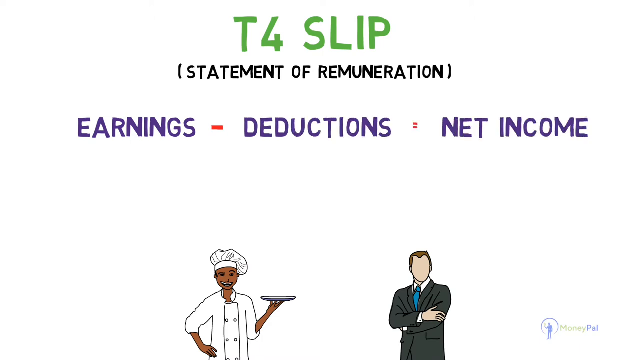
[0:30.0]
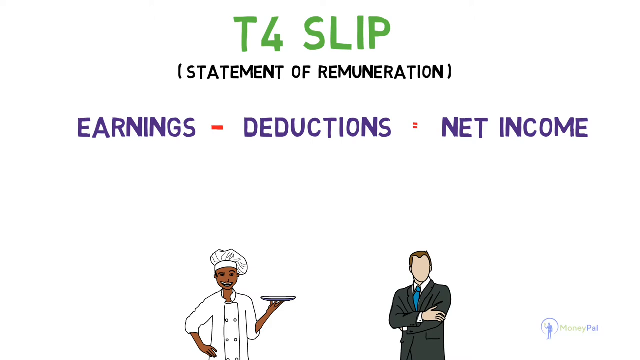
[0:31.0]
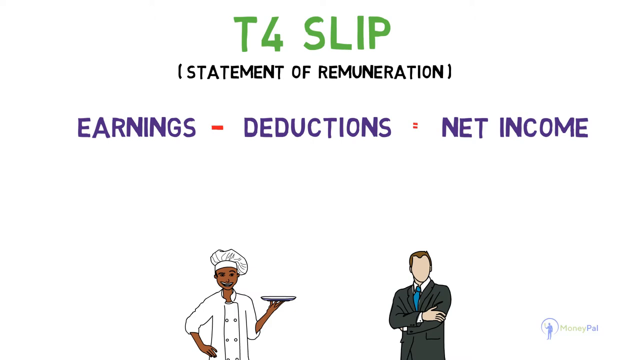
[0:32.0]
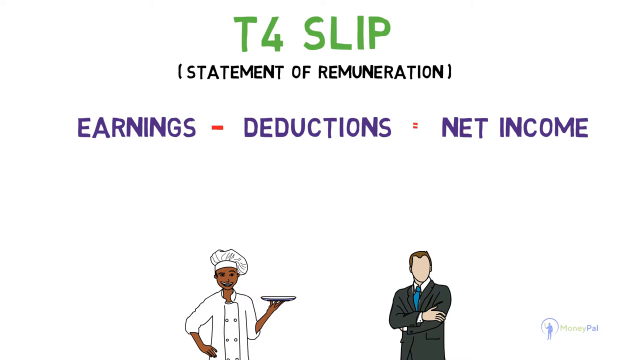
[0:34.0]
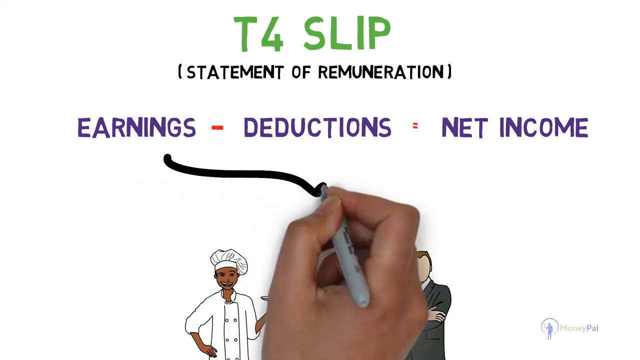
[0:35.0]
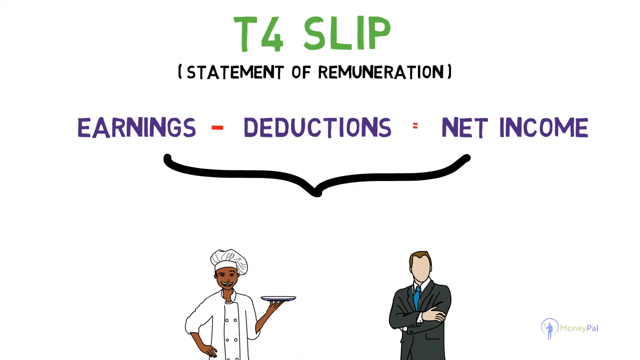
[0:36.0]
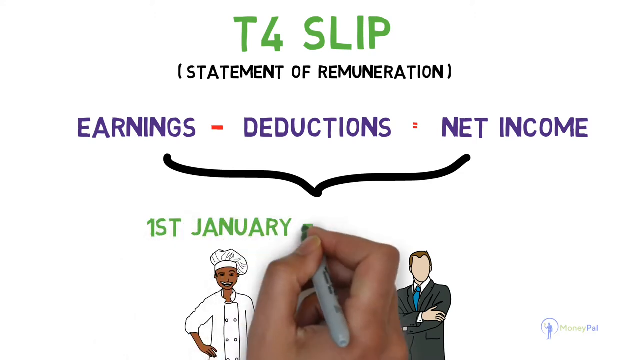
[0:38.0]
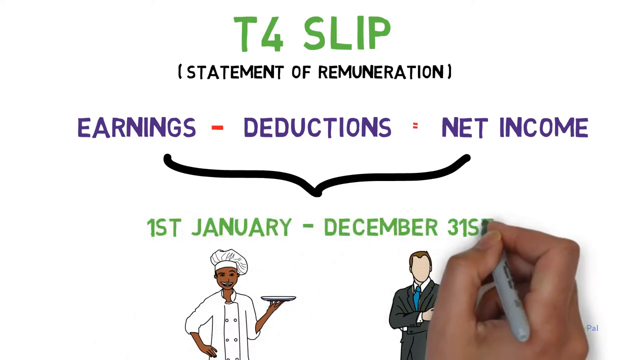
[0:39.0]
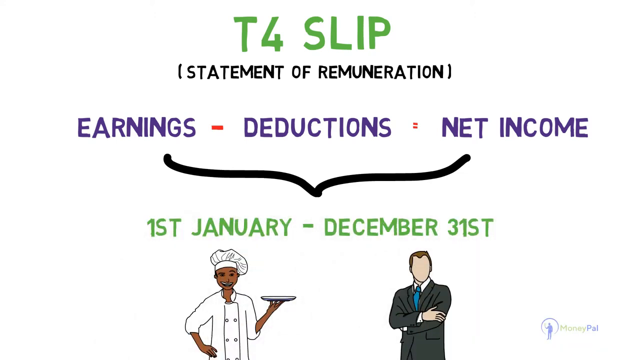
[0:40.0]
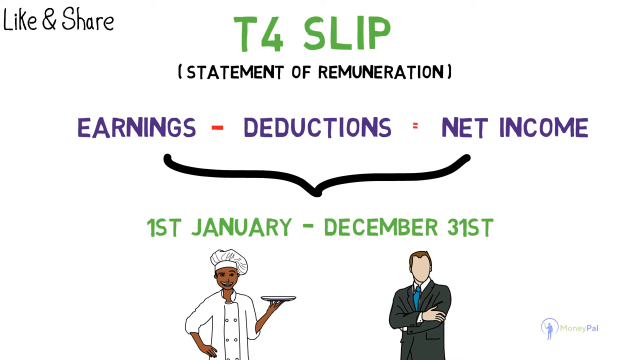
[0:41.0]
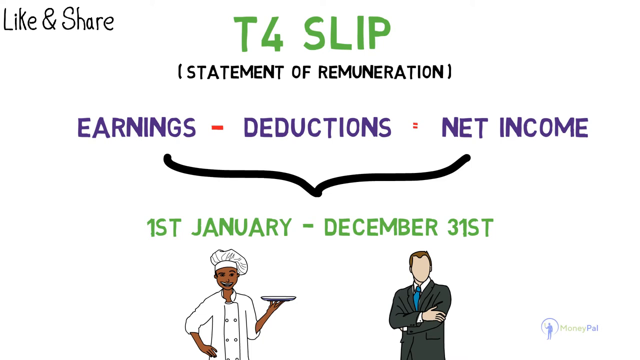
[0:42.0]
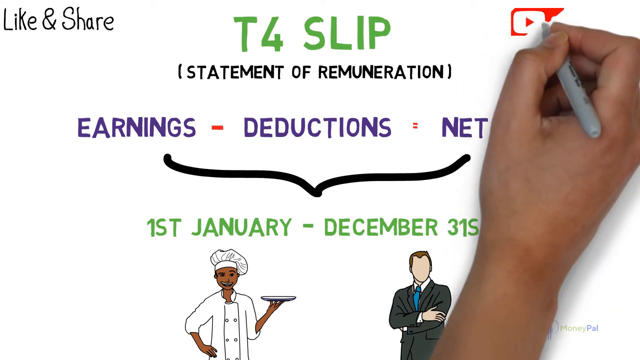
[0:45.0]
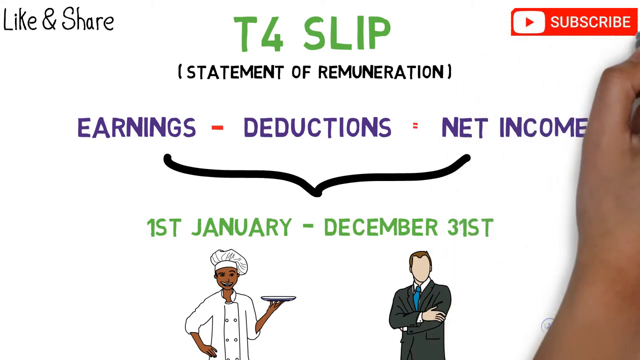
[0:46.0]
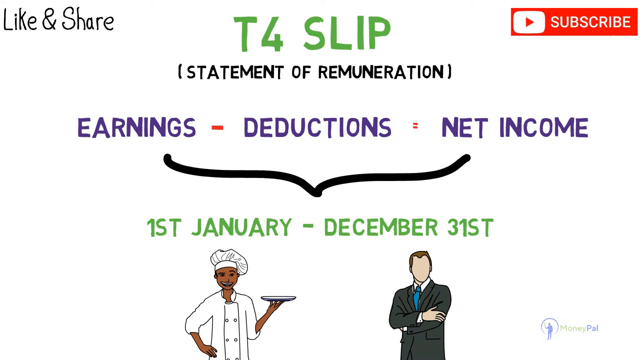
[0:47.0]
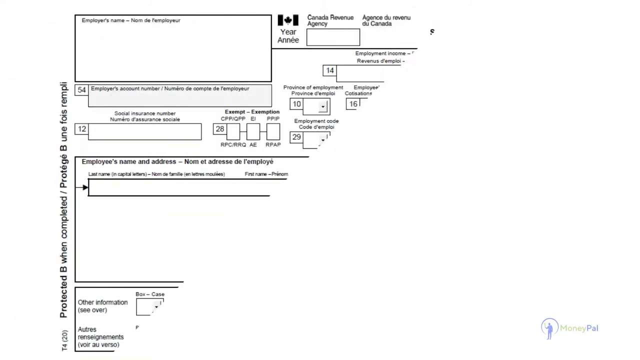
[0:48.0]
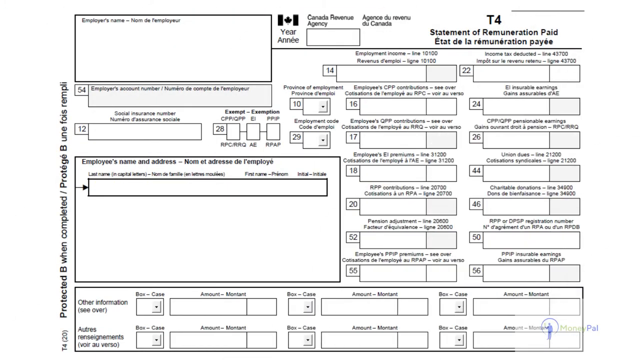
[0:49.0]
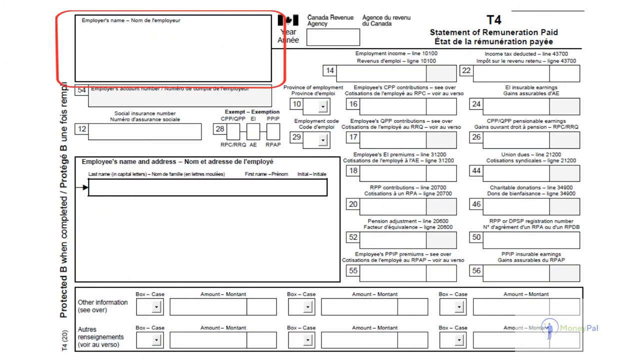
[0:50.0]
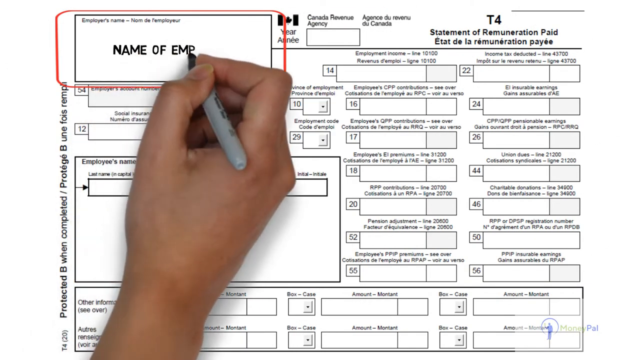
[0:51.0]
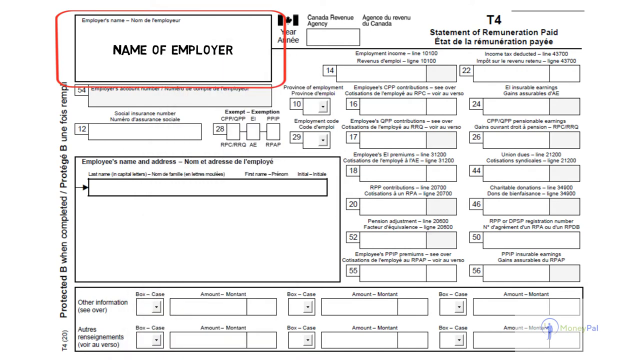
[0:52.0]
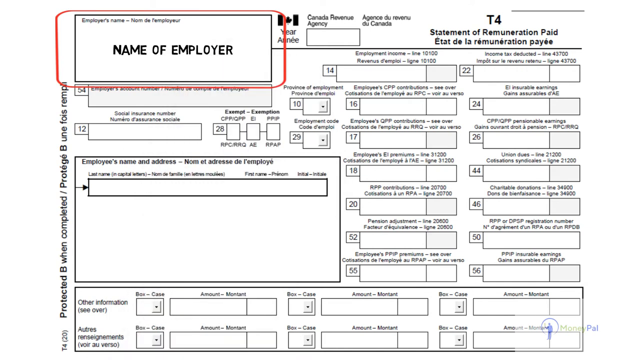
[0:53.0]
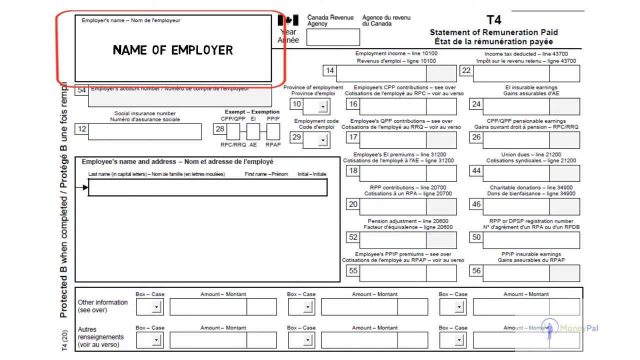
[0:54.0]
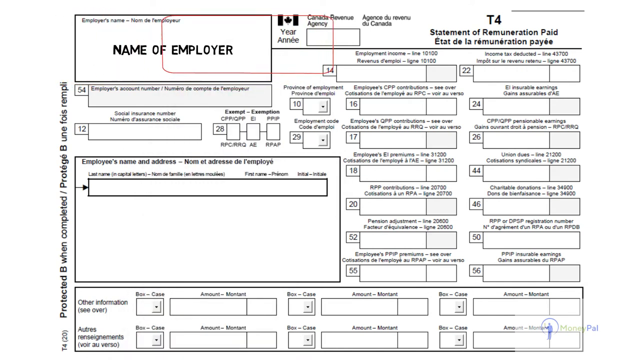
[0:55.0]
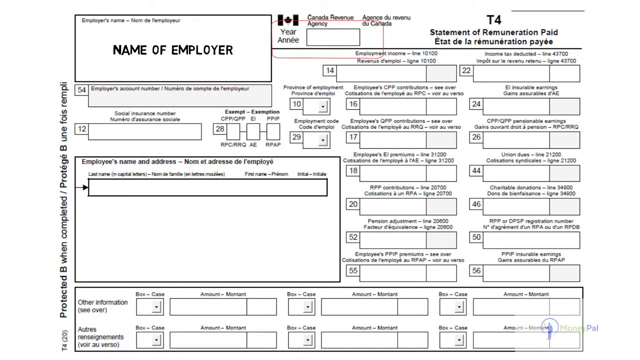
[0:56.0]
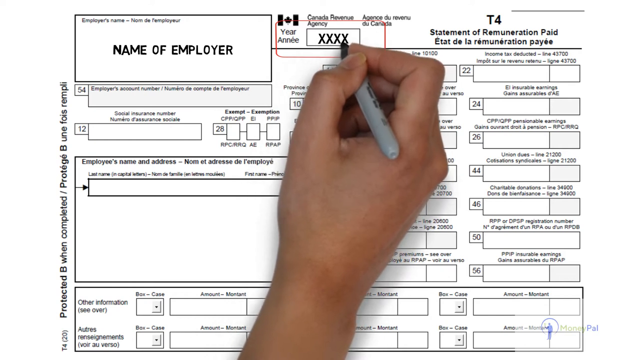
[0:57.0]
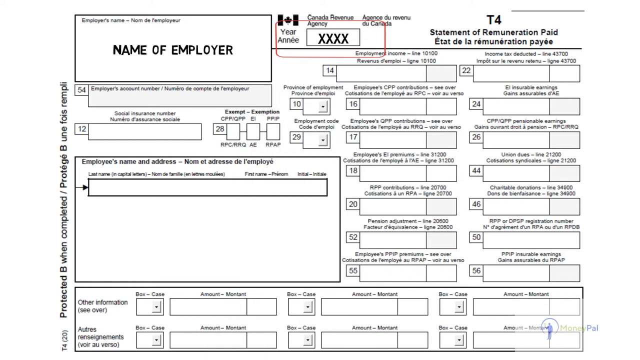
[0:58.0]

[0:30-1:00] The T4 slip is still shown on the white background. A man in a black suit and blue tie stands with his arms crossed, and the text "earnings minus deductions equals net income" appears. In the bottom right corner is the Manipal logo. In brackets is the period of the statement of remuneration, from the 1st of January to the 31st of December. In the top left corner are like and share icons, and in the right corner a subscribe prompt. The T4 slip is shown again, and in the first block in the top left corner it indicates that the employer's name should be inserted; on the right side "xxx" is written where the year is to be inserted. The person then fills in the form.